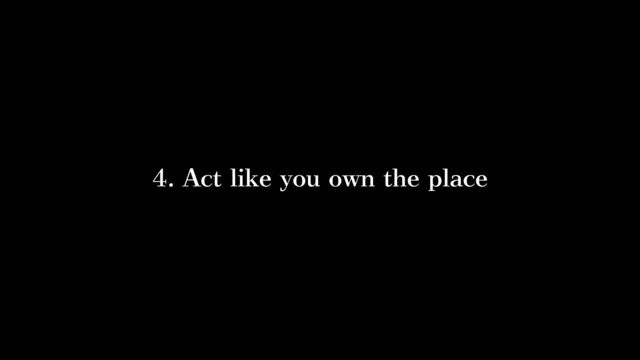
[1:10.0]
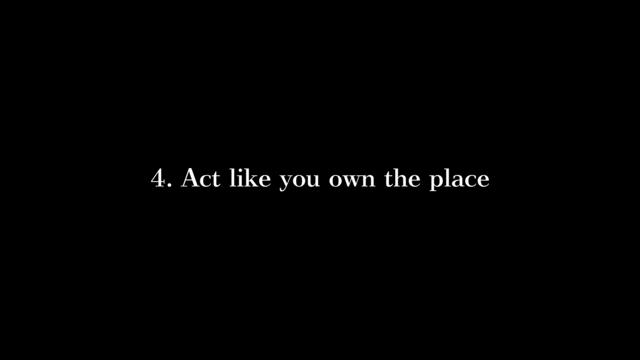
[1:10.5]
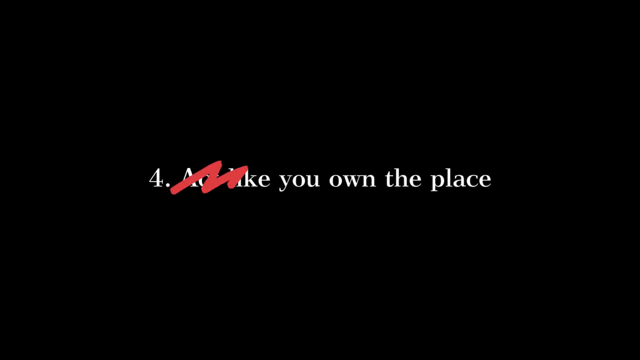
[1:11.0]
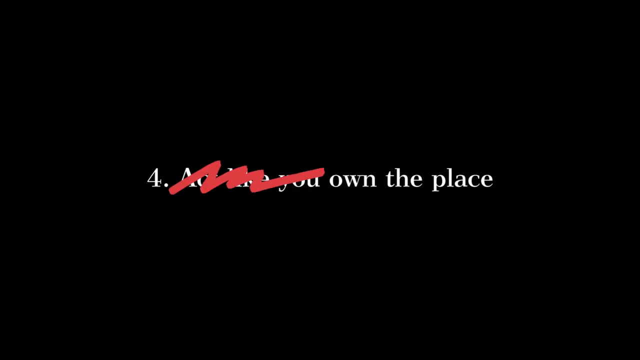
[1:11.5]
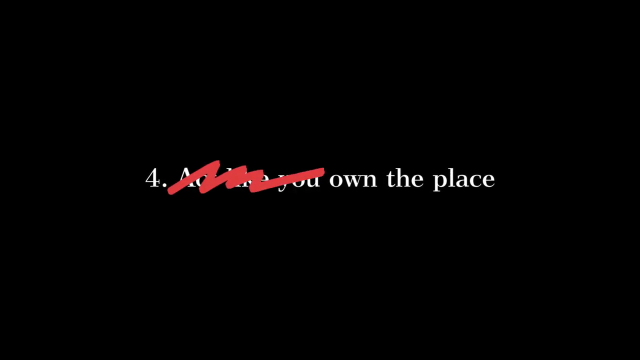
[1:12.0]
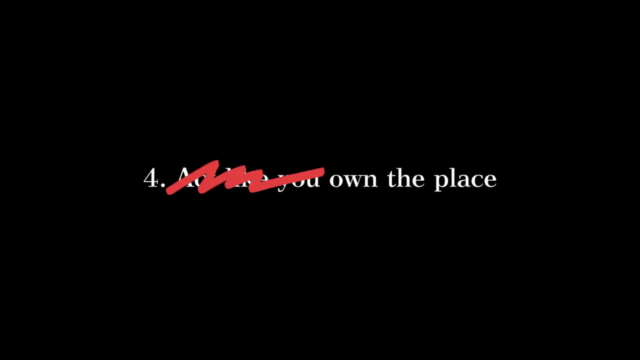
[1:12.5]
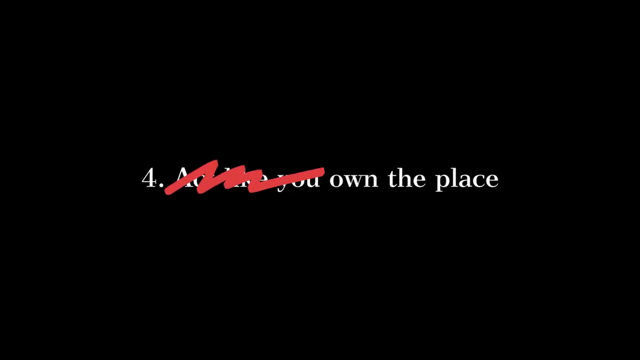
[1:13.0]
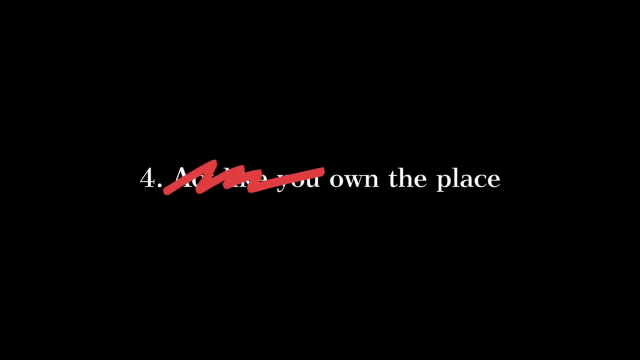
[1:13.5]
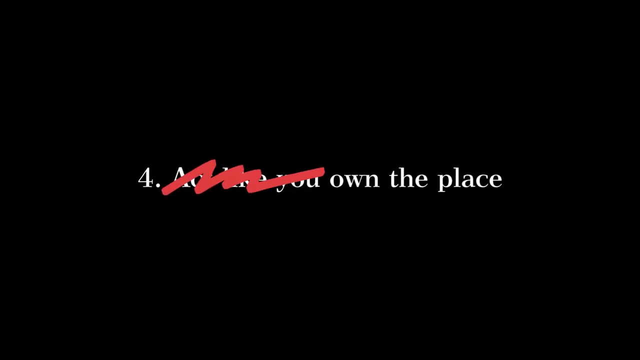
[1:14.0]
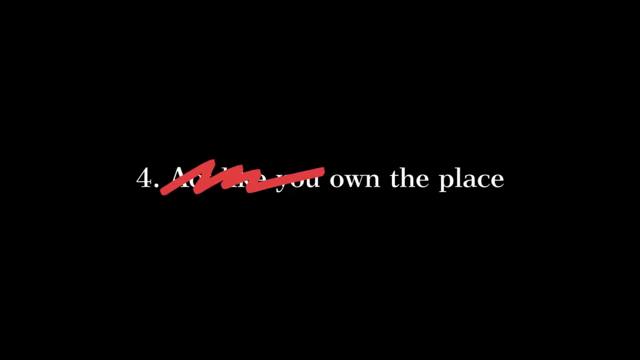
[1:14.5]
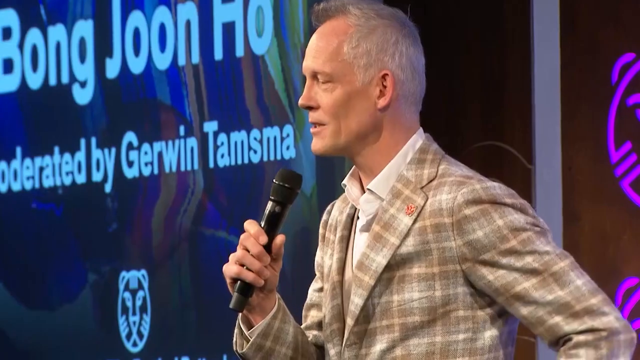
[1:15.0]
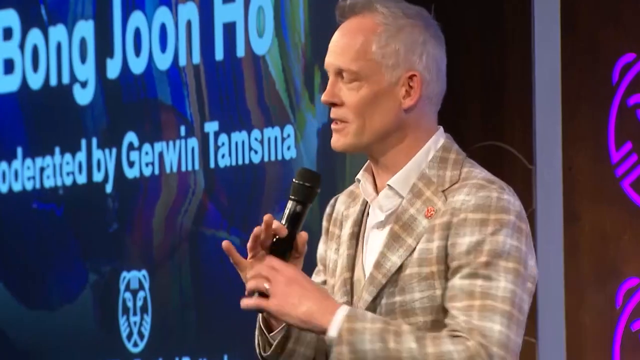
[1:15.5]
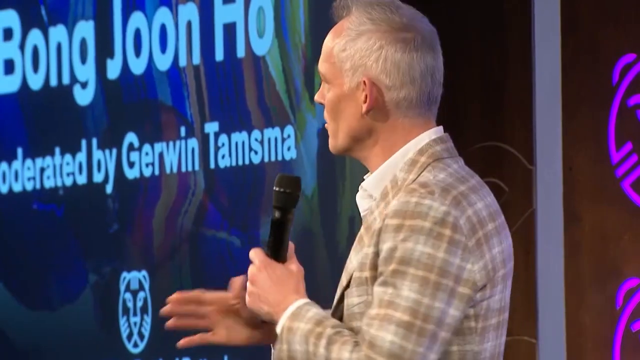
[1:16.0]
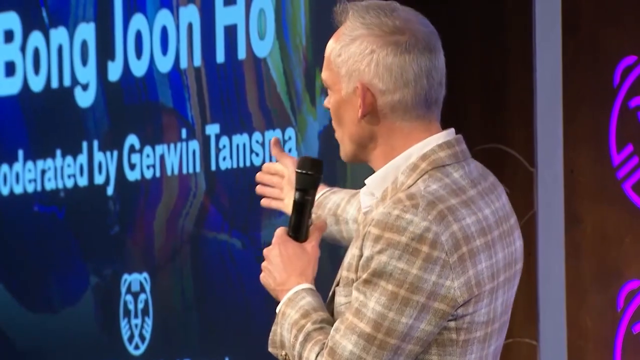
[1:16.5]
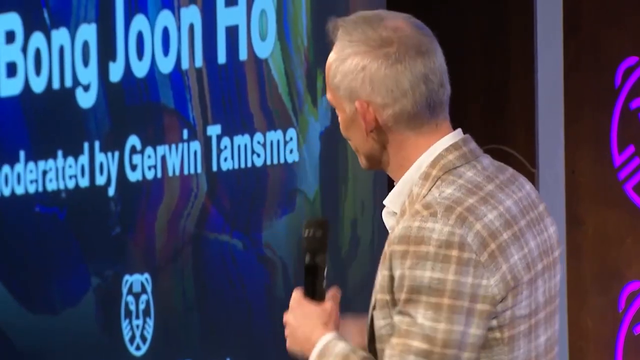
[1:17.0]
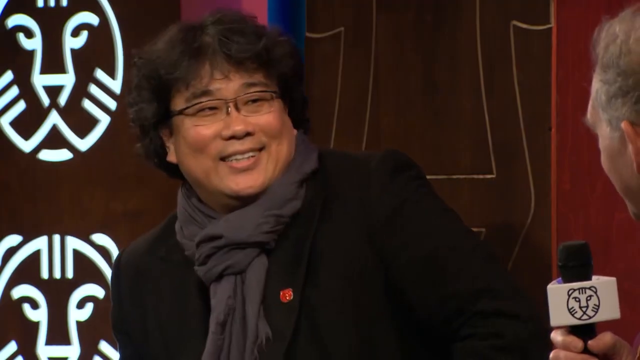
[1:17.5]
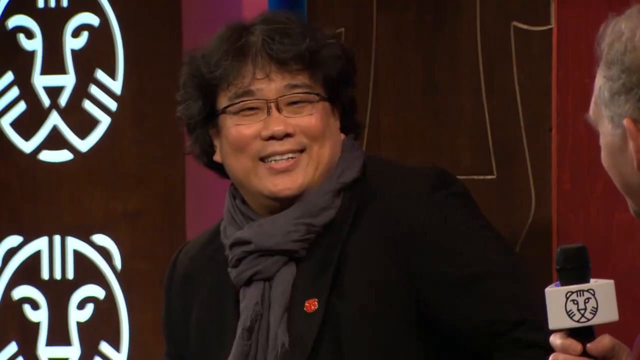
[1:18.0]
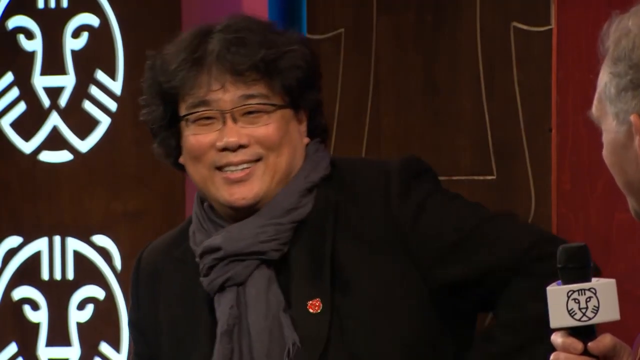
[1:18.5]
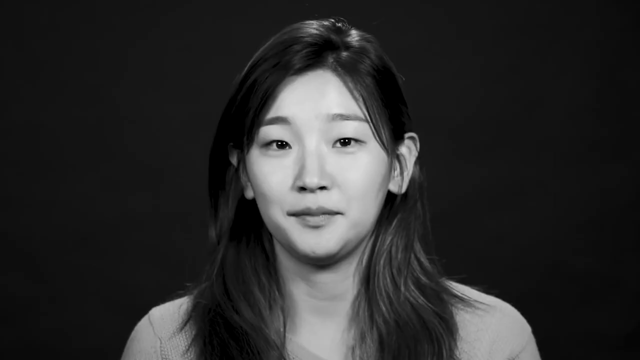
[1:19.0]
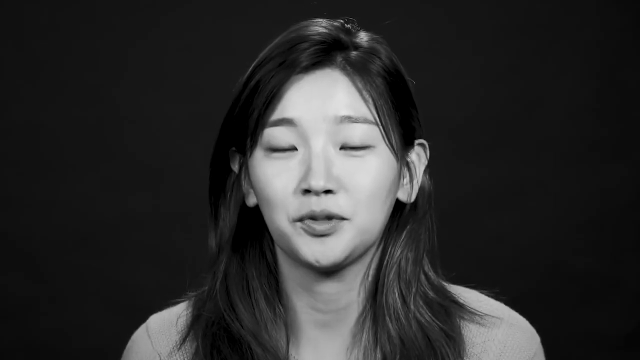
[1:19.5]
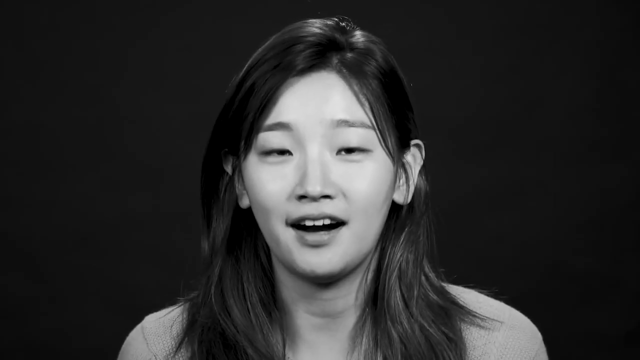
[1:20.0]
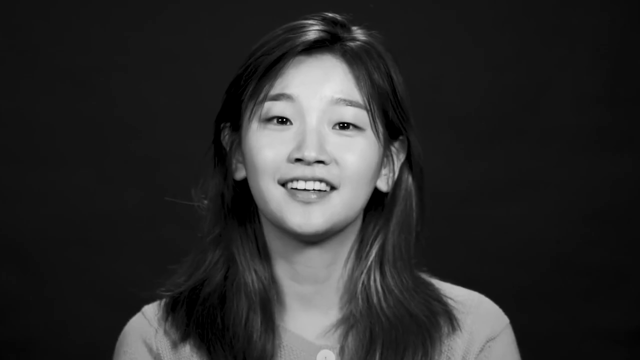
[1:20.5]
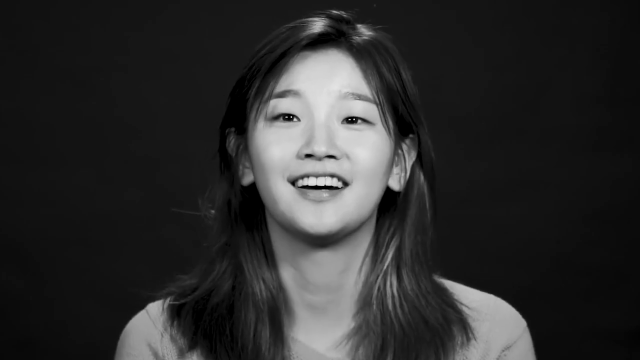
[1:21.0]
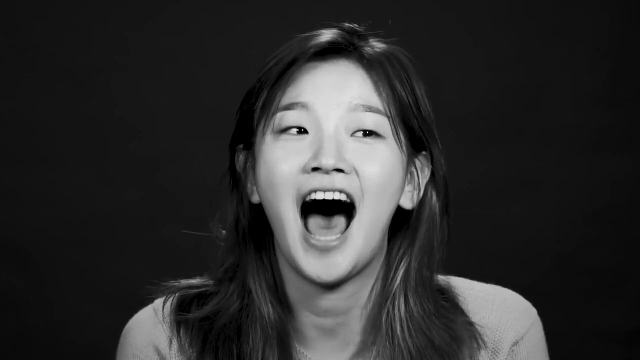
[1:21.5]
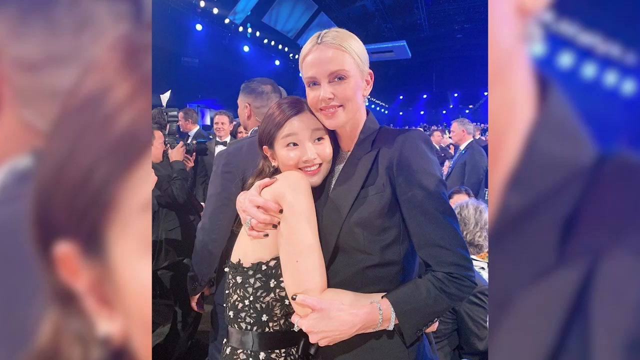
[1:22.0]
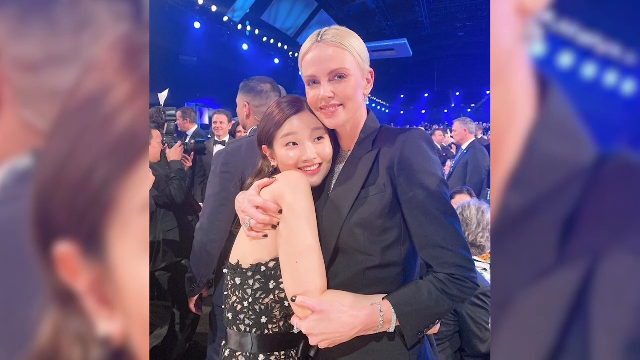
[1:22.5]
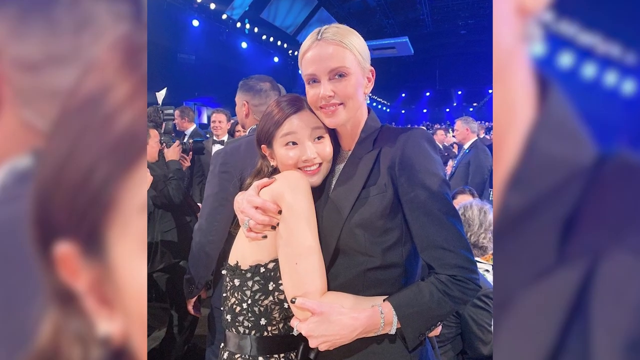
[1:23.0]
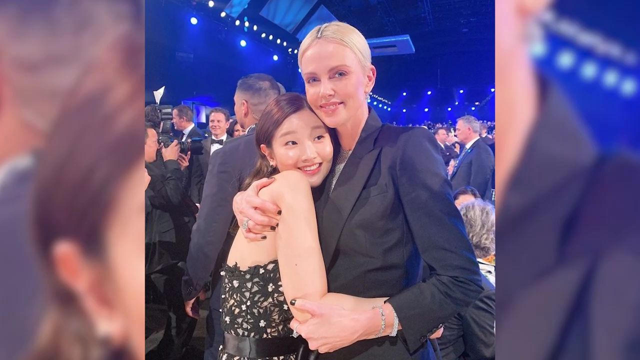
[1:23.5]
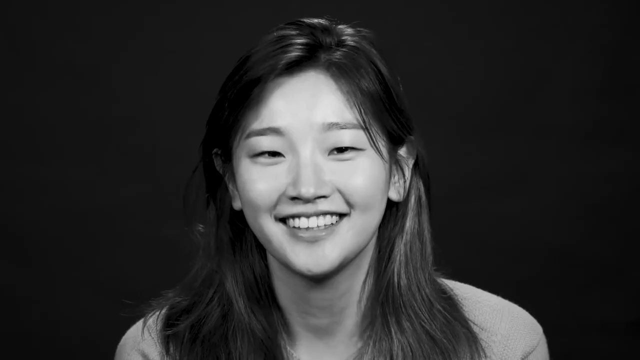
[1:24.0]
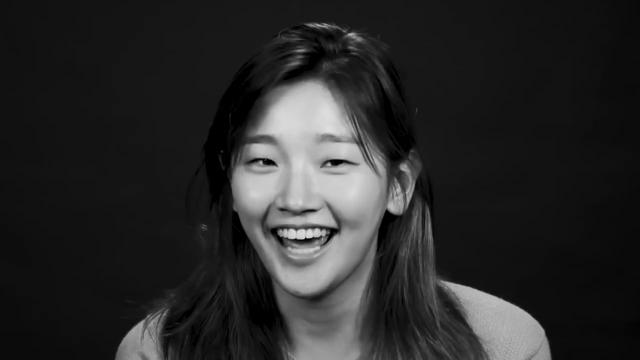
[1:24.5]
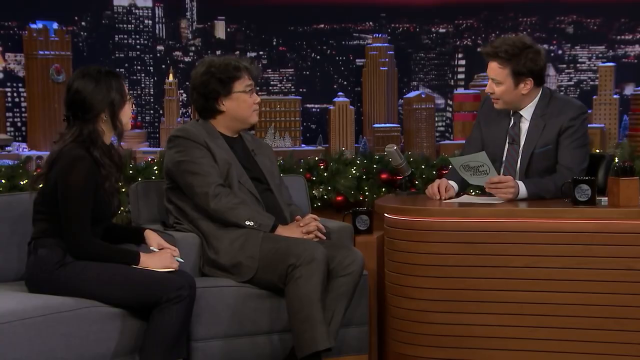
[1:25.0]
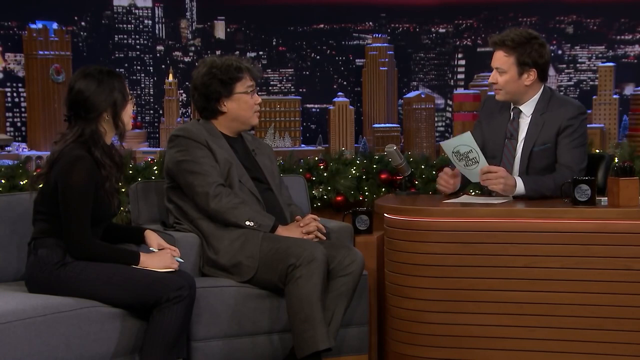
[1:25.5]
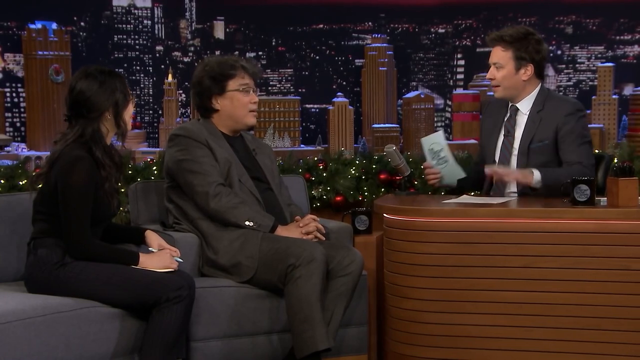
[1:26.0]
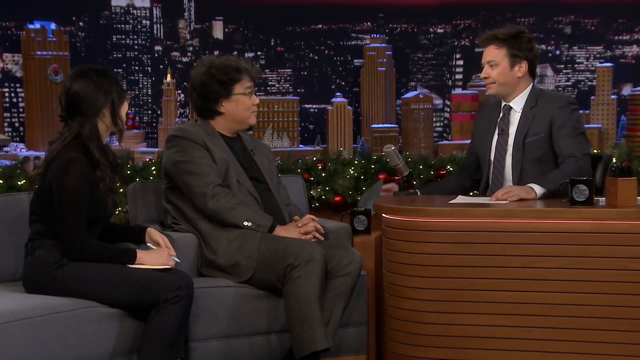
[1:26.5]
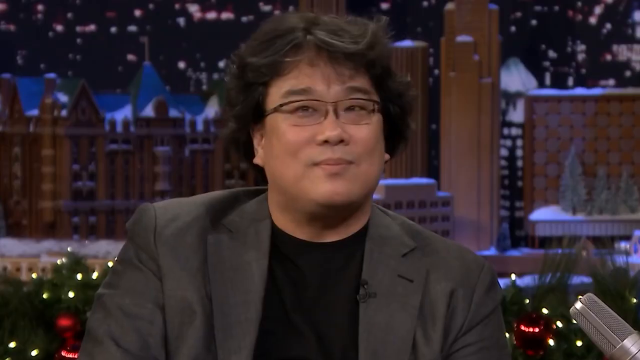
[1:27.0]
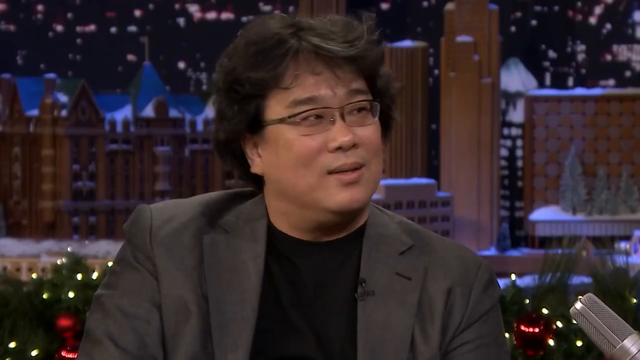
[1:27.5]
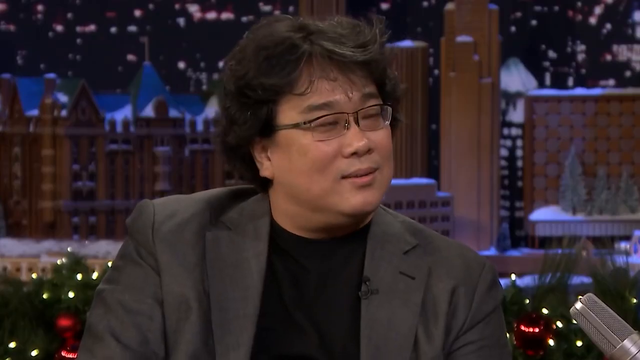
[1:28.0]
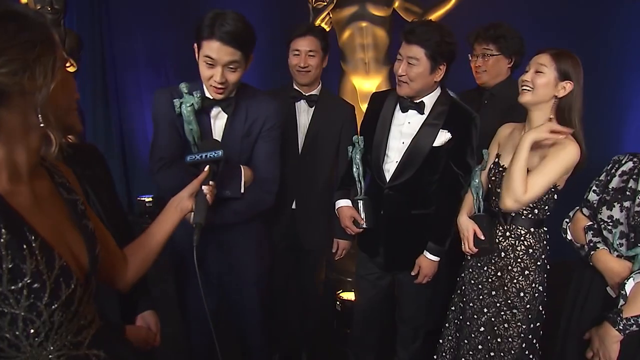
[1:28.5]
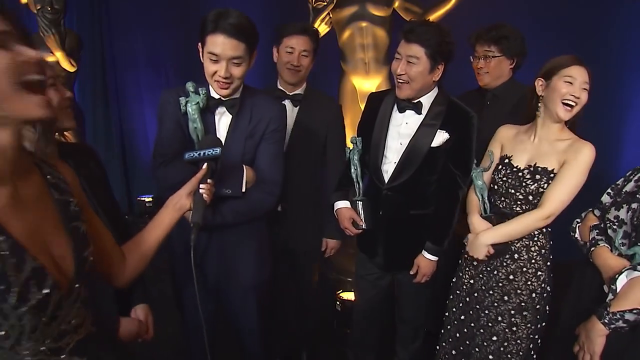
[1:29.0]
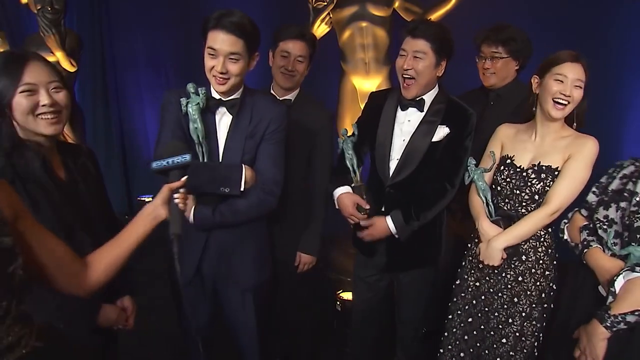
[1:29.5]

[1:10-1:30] The number four is written on a black background, followed by the text "act like you own the place". A man holding a mic talks to the audience; he wears a checker blazer, seemingly a wool suit, and a white shirt. Another person with glasses, a neck scarf, a black blazer and short hair appears, smiling and looking happy. A lady with long hair appears in black and white. In the background there are a lot of people who seem to be celebrating something, possibly at an award ceremony, with a lot of blue lights. A lady wearing a blazer hugs a woman wearing a backless dress; they are smiling, seem happy, and seem to be posing for a photographer.